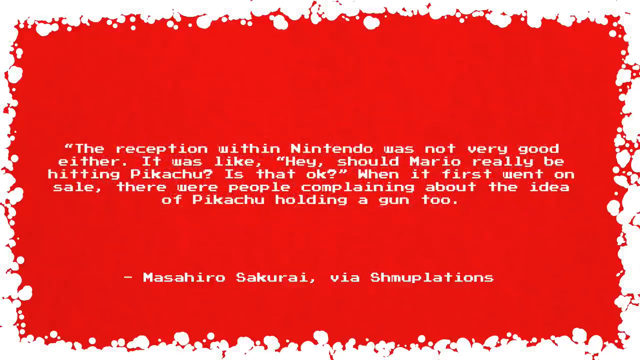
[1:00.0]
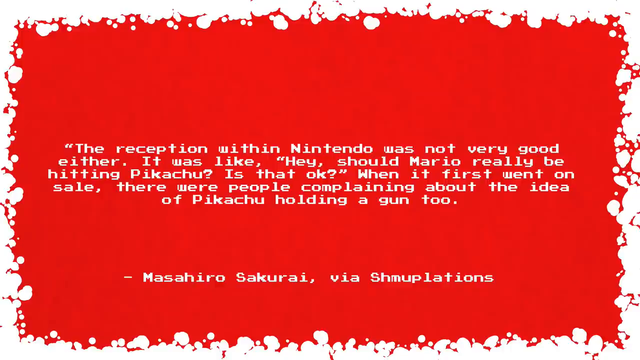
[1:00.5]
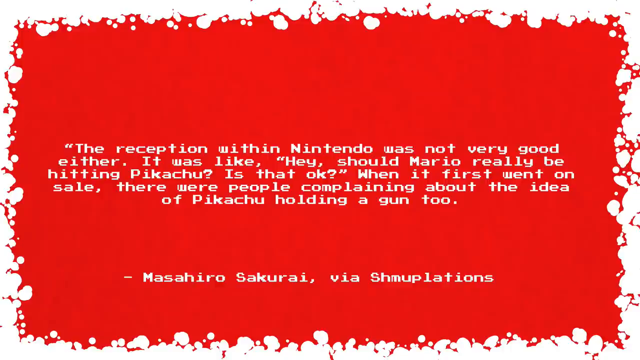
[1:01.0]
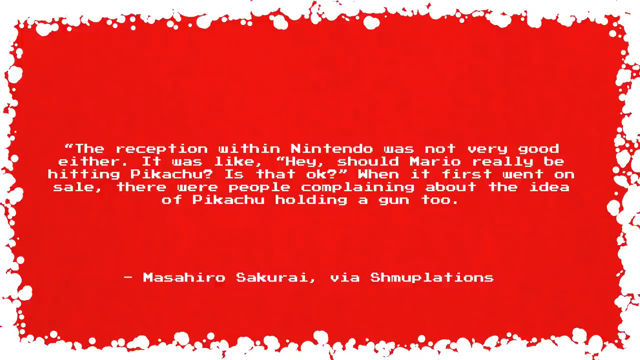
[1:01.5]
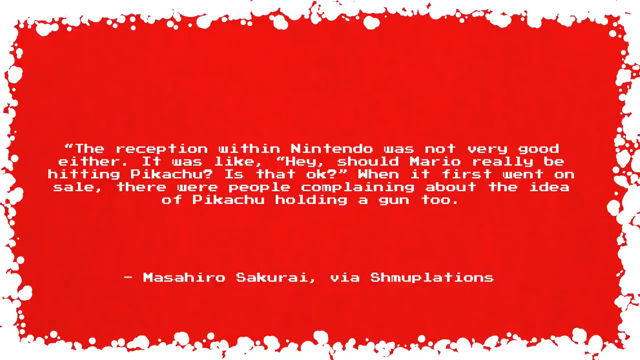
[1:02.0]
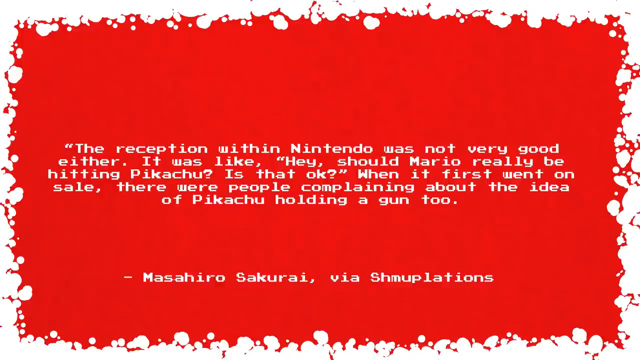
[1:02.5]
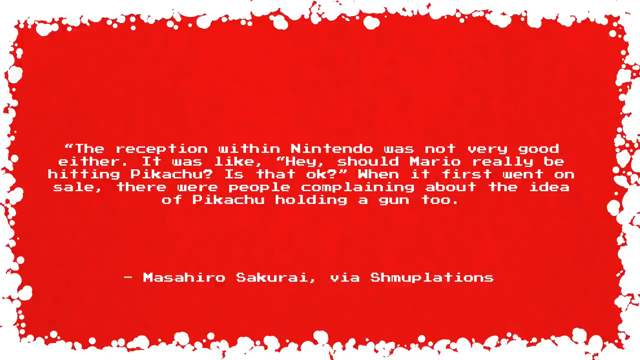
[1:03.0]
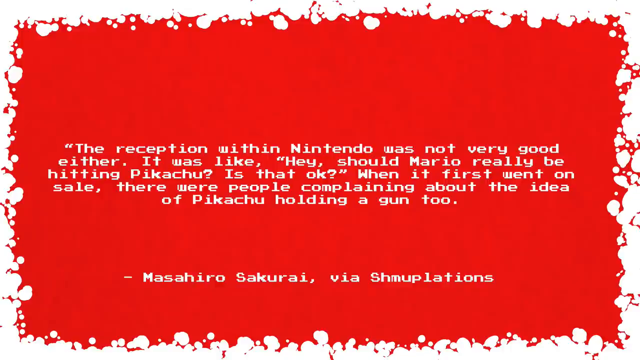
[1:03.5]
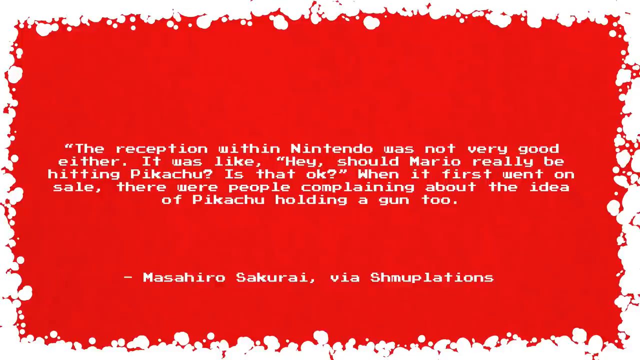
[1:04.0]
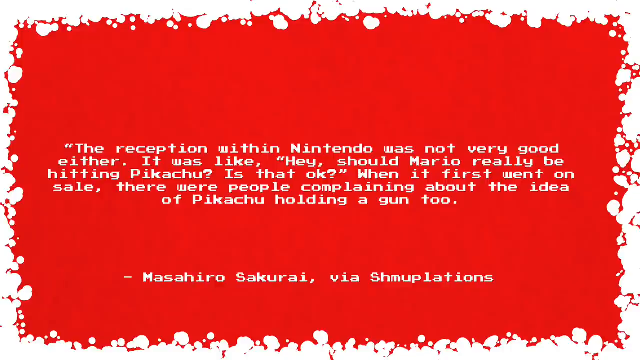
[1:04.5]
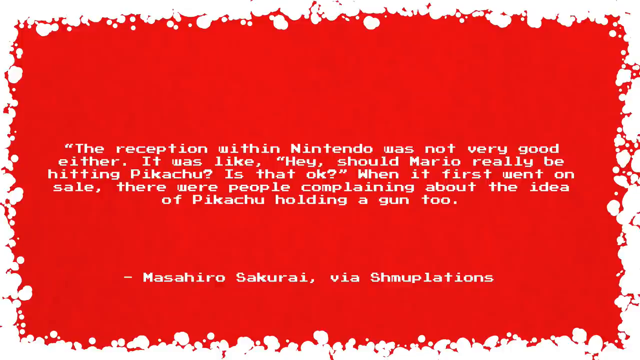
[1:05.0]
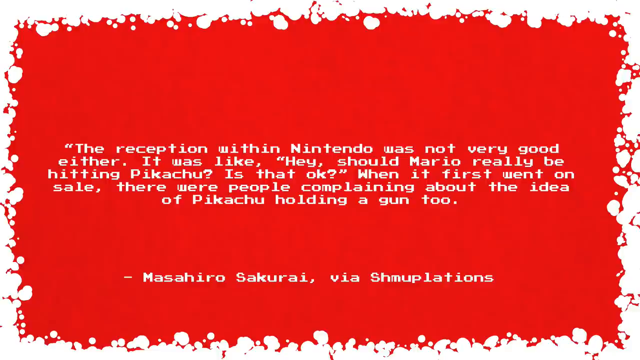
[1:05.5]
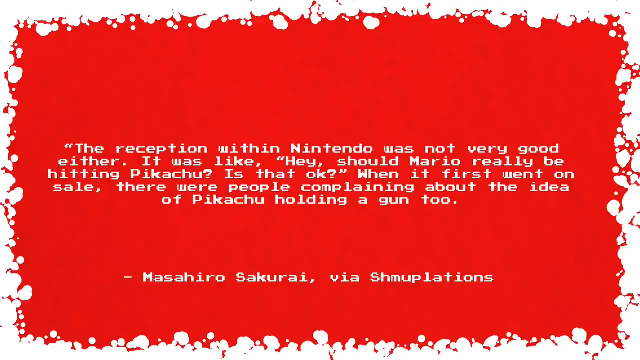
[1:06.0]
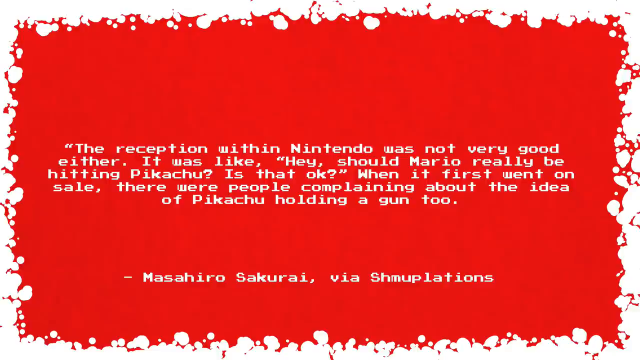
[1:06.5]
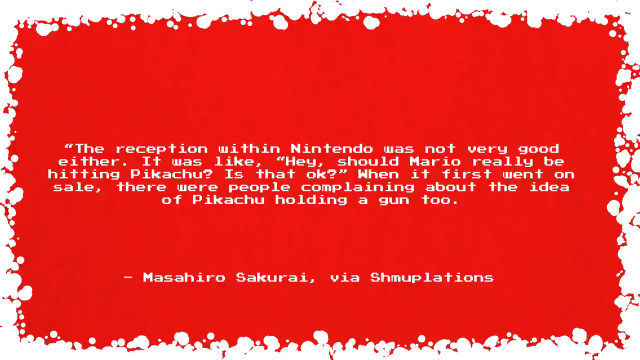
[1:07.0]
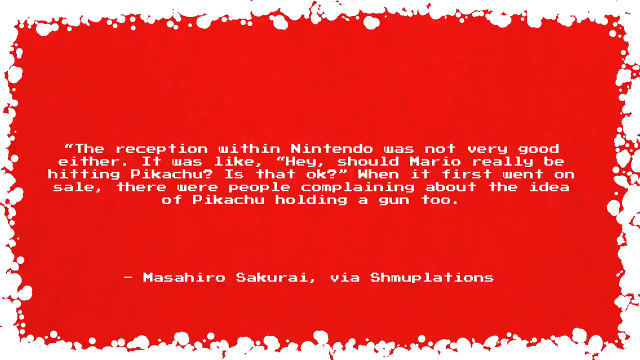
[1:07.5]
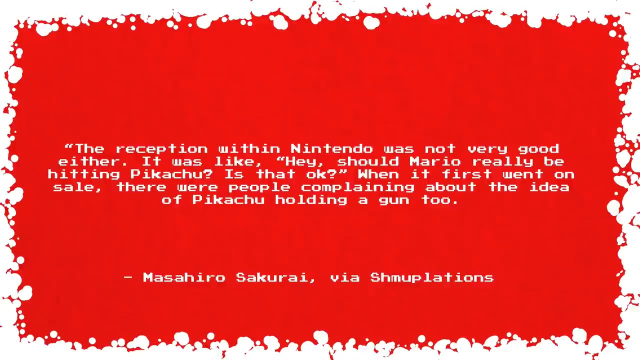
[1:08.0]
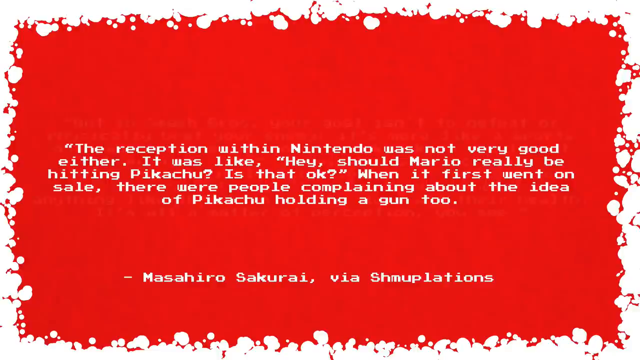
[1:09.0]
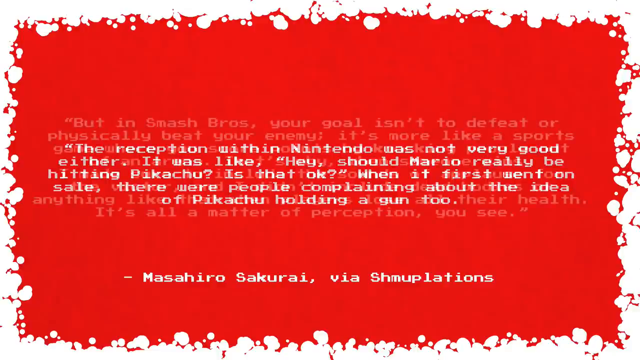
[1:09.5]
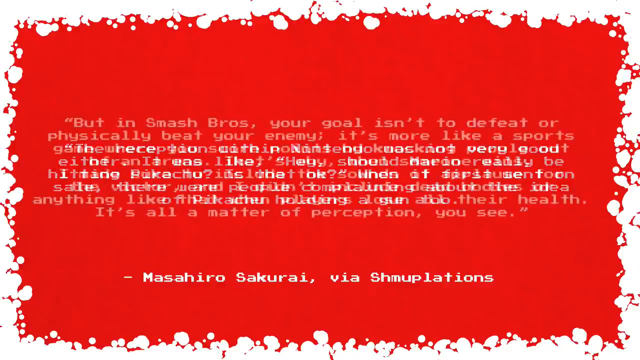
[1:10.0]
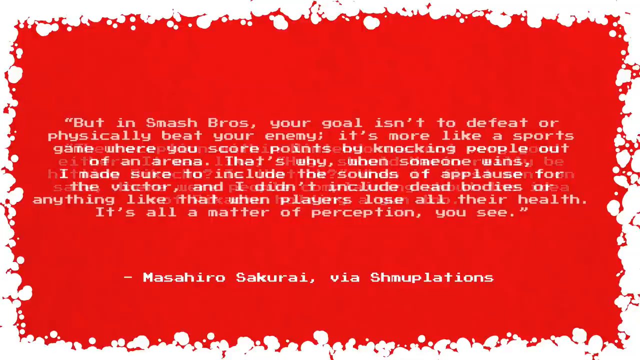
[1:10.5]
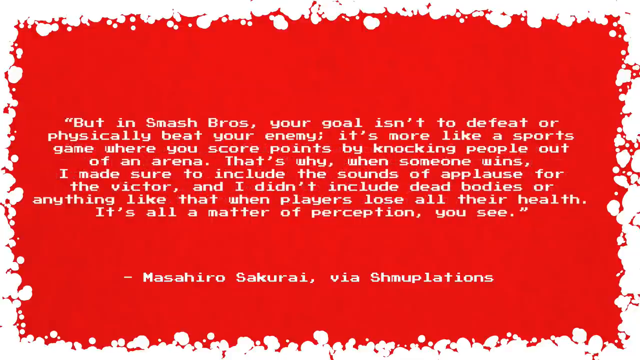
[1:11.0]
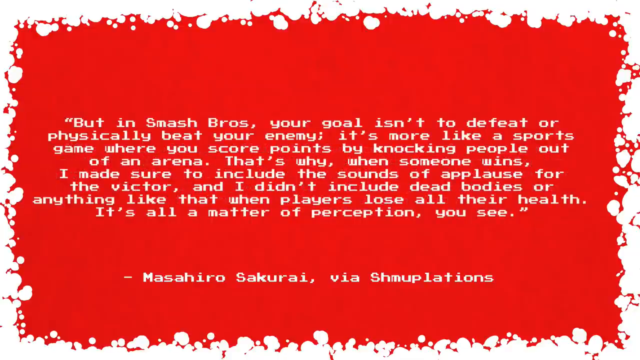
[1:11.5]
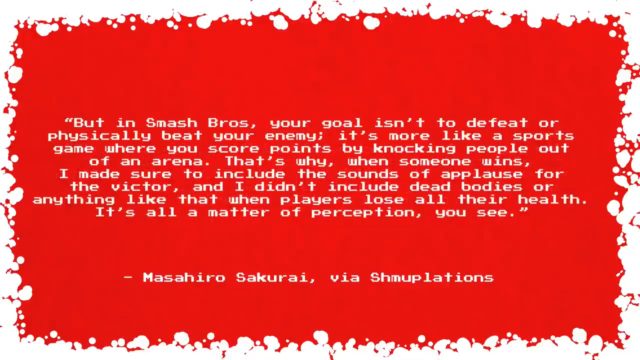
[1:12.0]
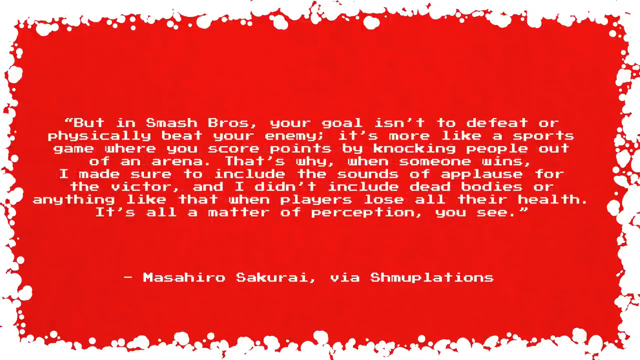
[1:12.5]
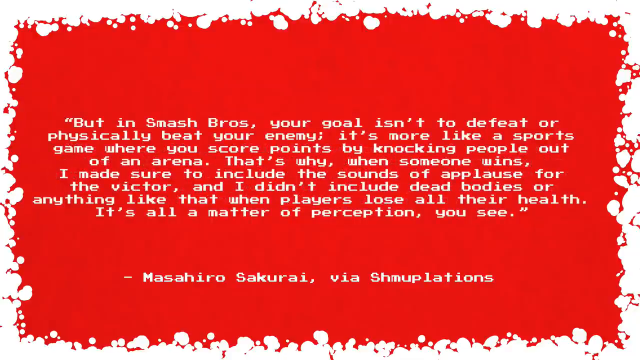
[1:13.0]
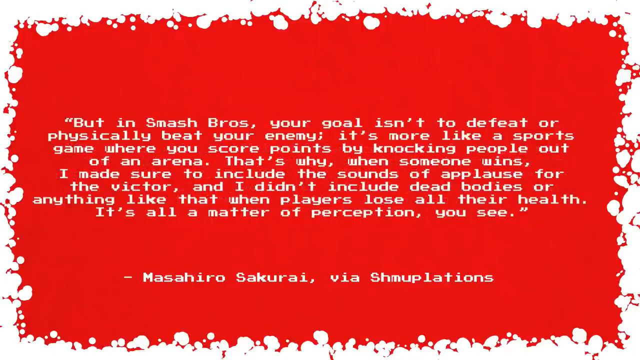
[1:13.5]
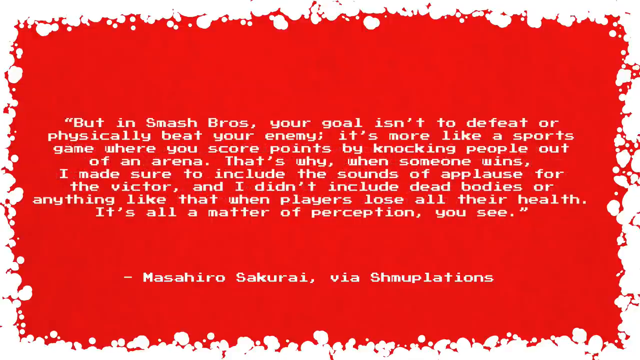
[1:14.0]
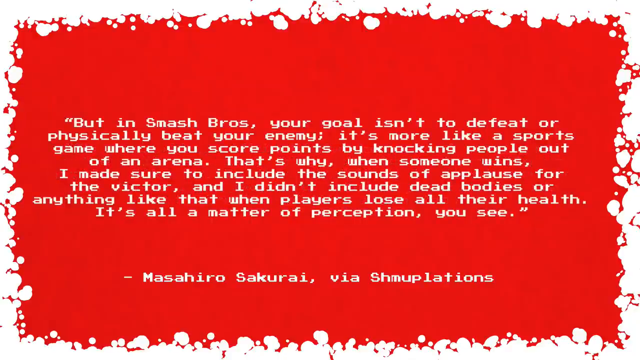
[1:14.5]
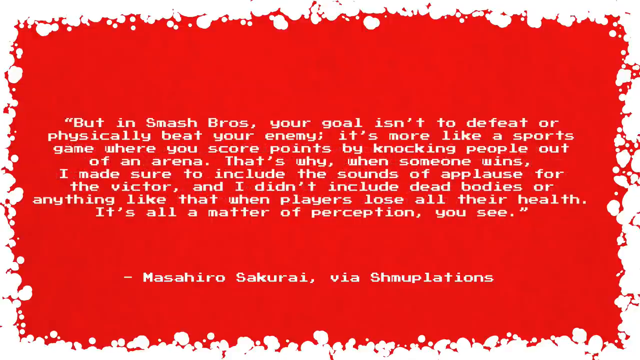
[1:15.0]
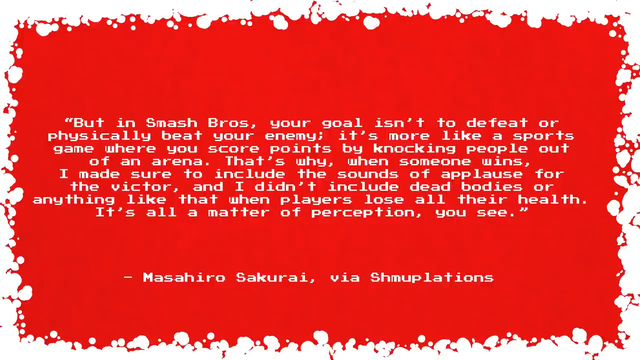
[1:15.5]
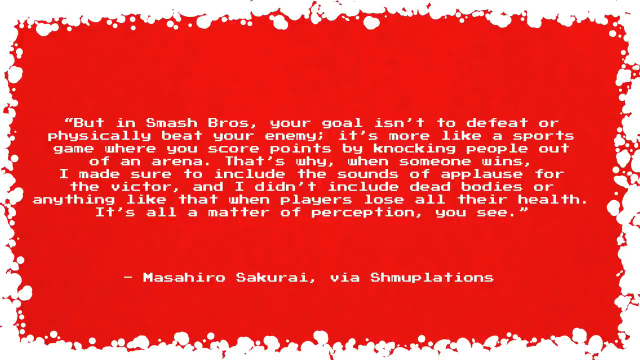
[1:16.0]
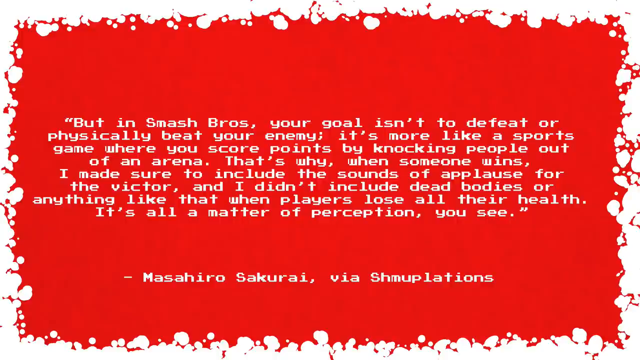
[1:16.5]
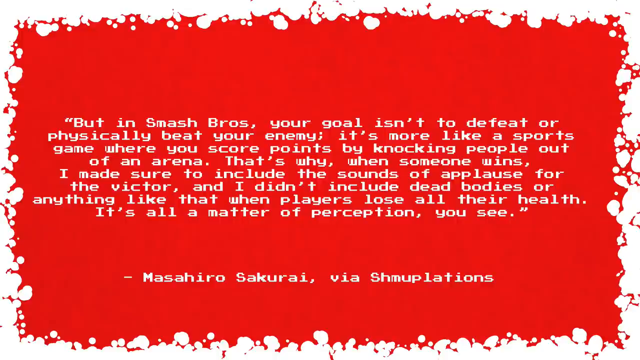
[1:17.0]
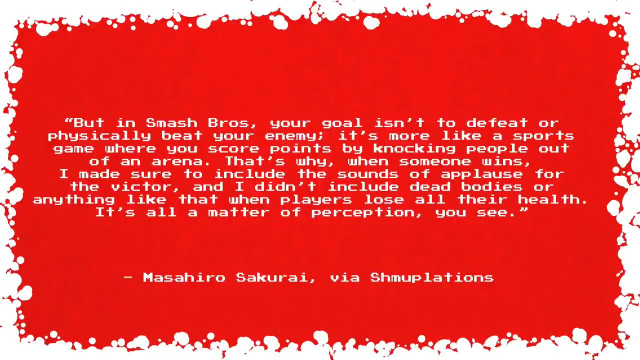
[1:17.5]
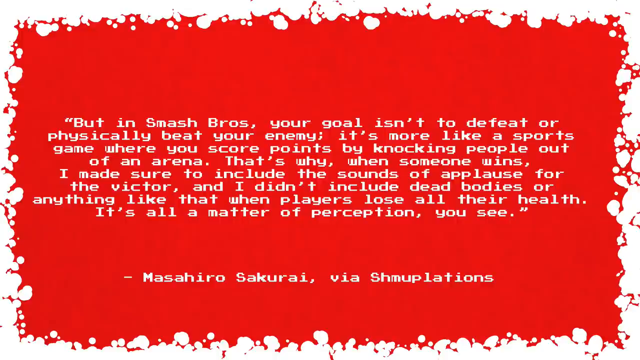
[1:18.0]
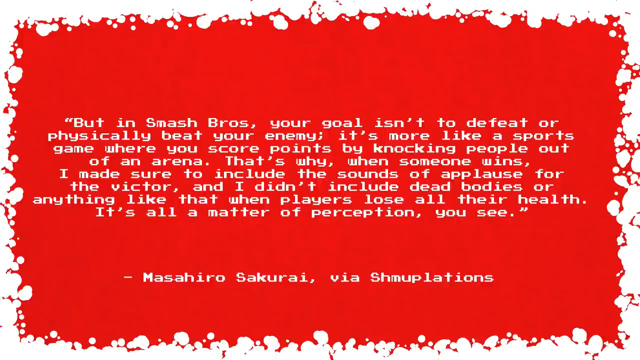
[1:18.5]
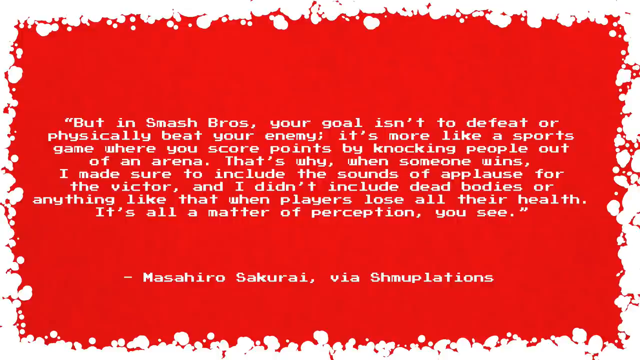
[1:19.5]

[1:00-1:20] The white text on the red background remains, with burn or blood marks along the edges kind of giving it texture; the text asks whether Mario should really be hitting Pikachu. It then transitions to a new passage, which reads: "But in Smash Bros, your goal isn't to defeat or physically beat your enemy. It's more like a sports game where you score points by knocking people out of an arena. That's why when someone wins, I made sure to include the sounds of applause for the victor. I didn't include dead bodies or anything like that. When players lose all their health, it's all a matter of perception you see." At the bottom, it says "Masahiro Sakurai via Shmuplation." There is no motion; it is just white text in the middle of the screen and more white text at the bottom clarifying who said it.